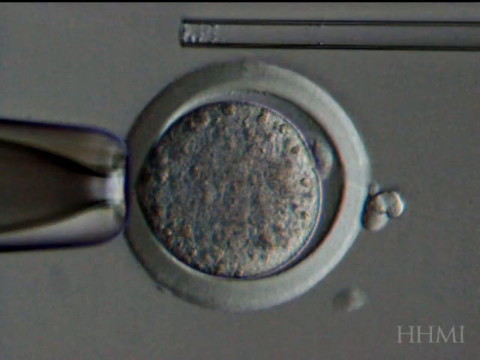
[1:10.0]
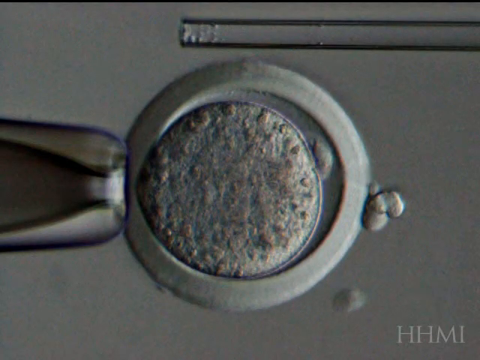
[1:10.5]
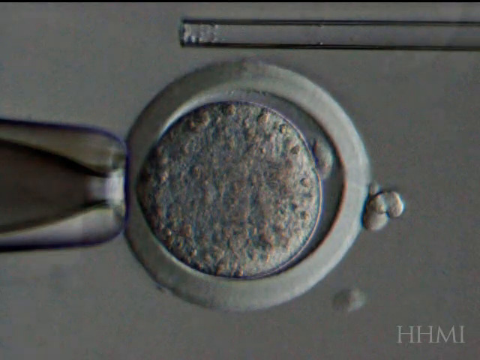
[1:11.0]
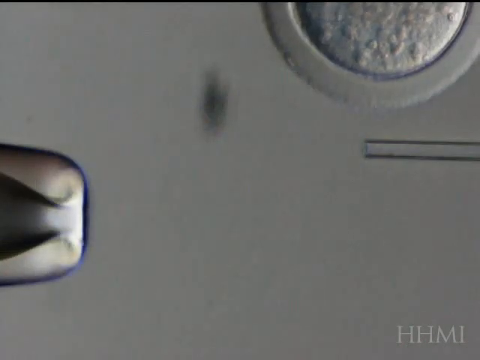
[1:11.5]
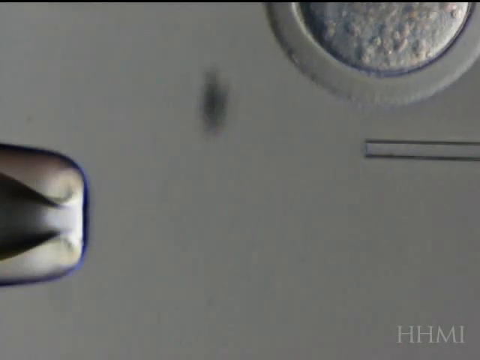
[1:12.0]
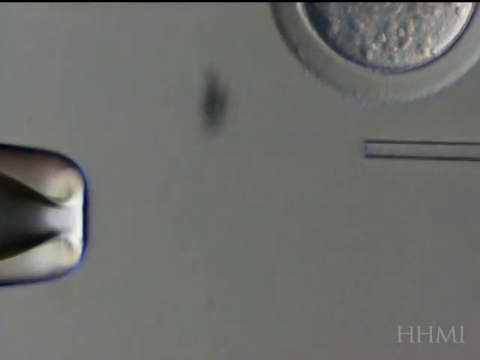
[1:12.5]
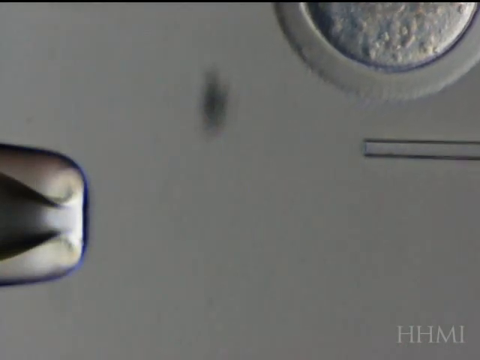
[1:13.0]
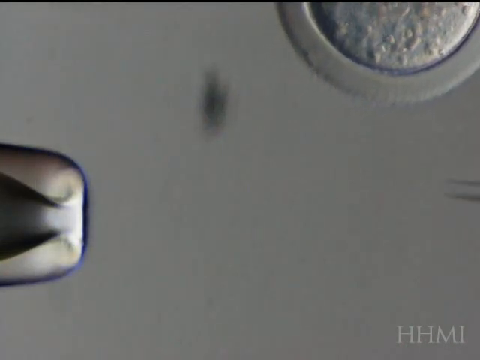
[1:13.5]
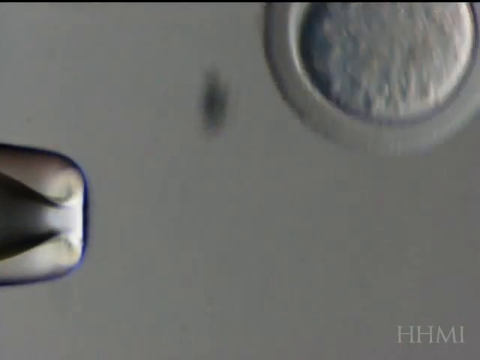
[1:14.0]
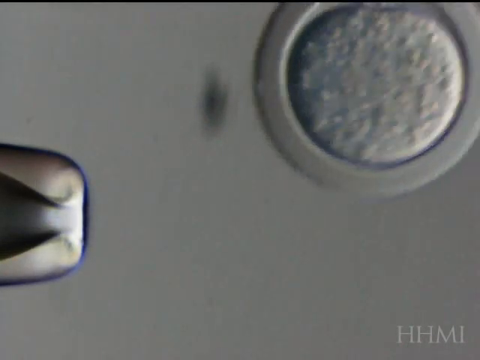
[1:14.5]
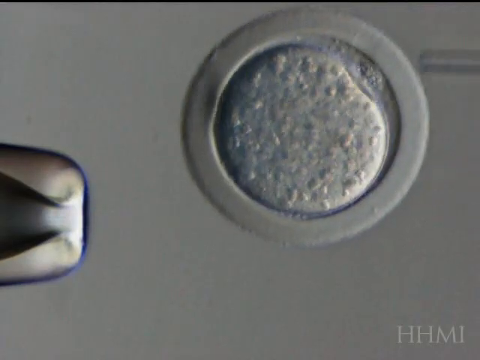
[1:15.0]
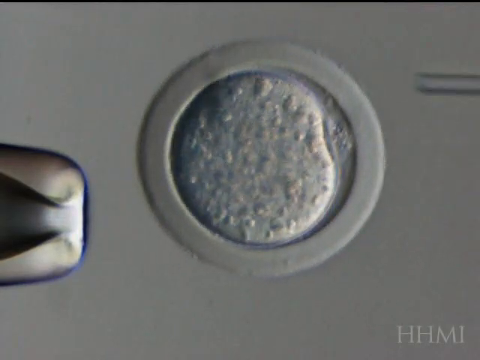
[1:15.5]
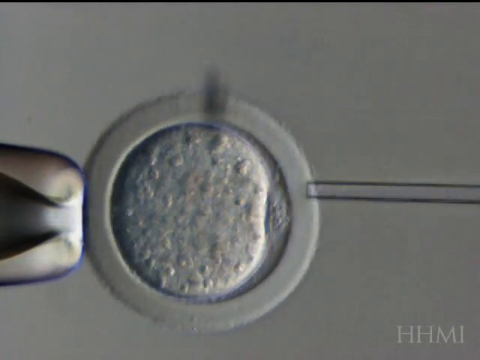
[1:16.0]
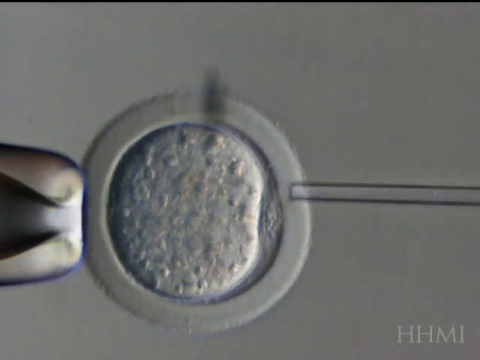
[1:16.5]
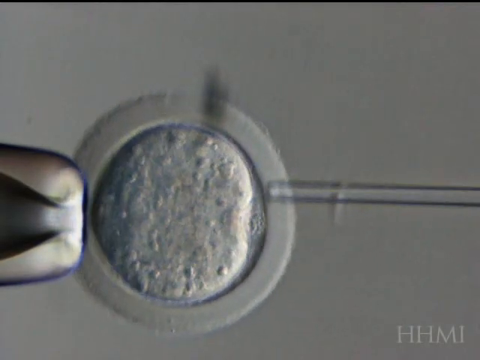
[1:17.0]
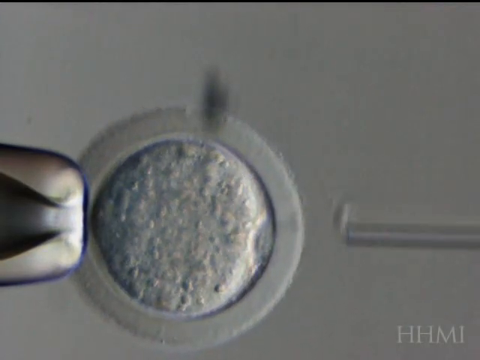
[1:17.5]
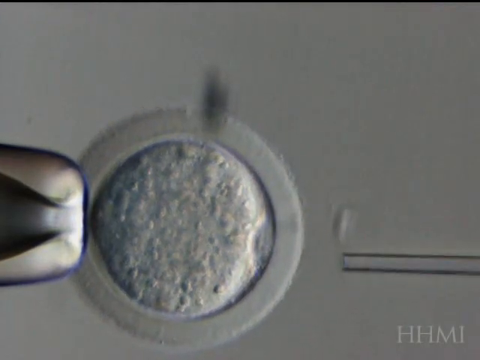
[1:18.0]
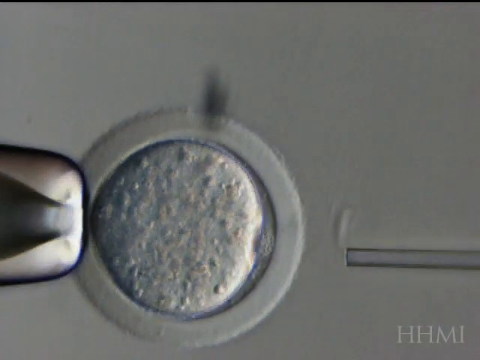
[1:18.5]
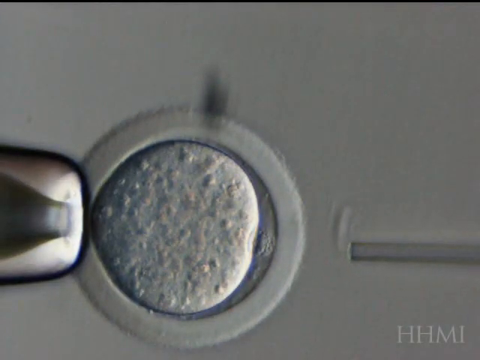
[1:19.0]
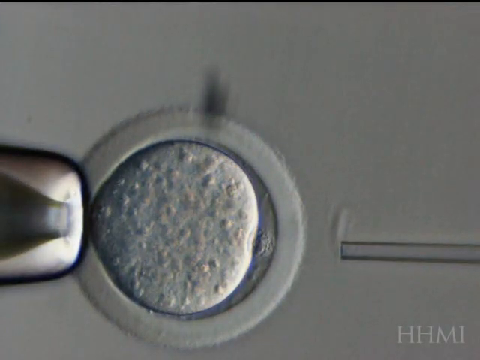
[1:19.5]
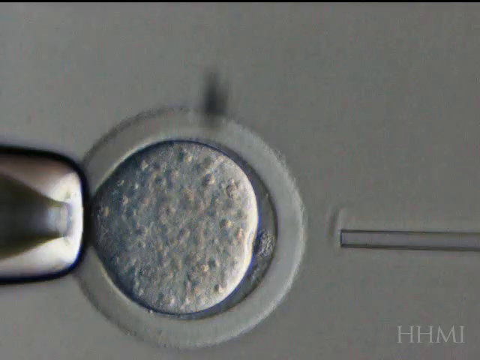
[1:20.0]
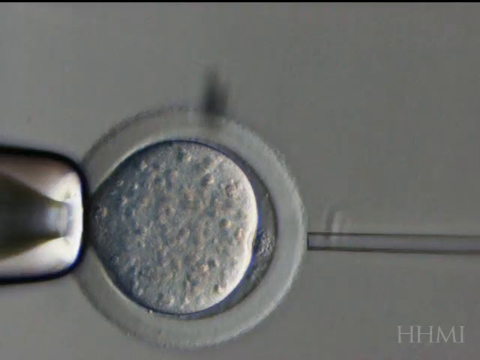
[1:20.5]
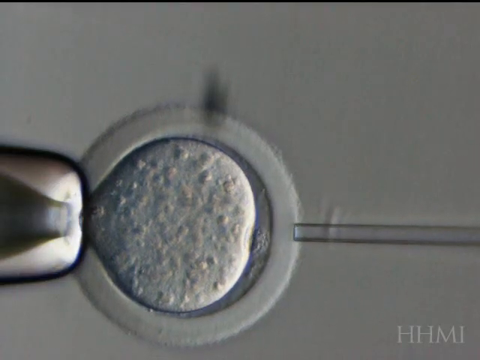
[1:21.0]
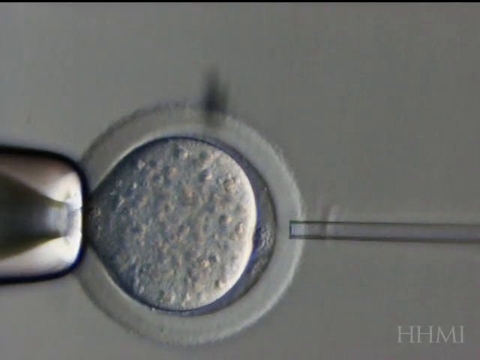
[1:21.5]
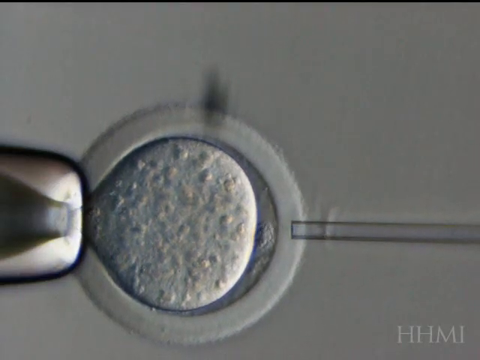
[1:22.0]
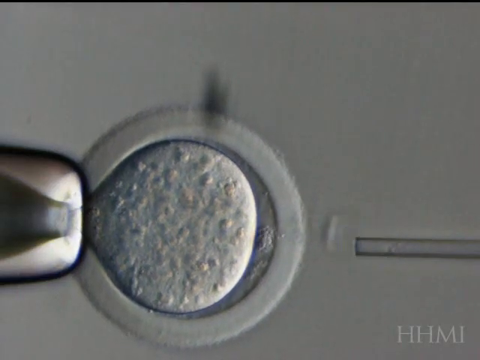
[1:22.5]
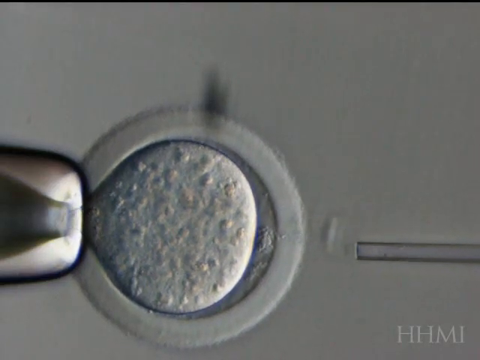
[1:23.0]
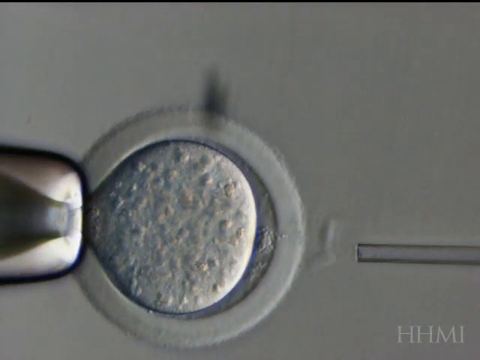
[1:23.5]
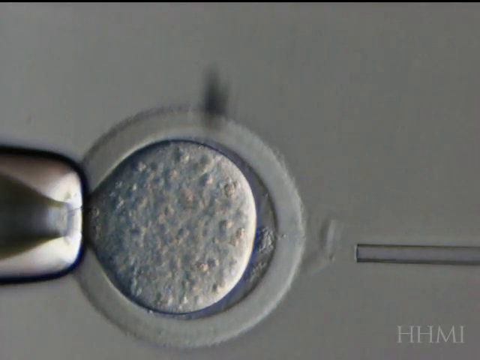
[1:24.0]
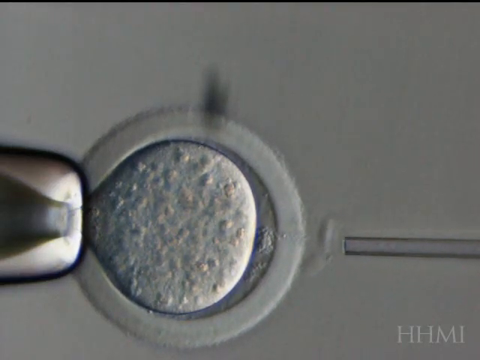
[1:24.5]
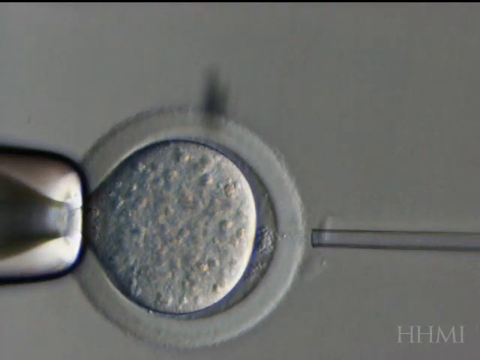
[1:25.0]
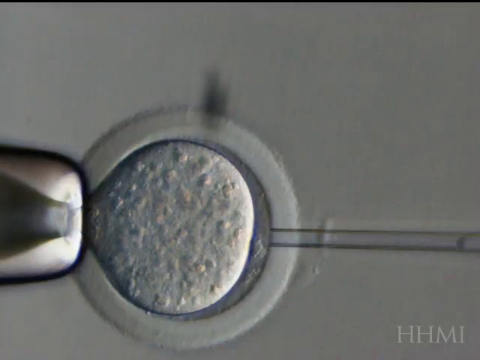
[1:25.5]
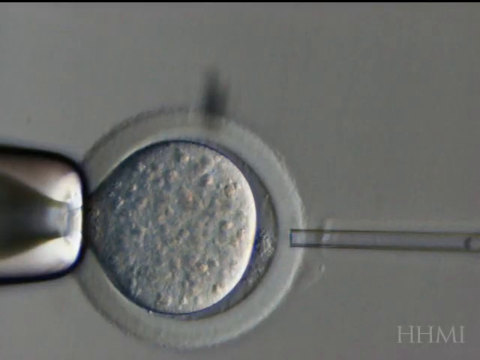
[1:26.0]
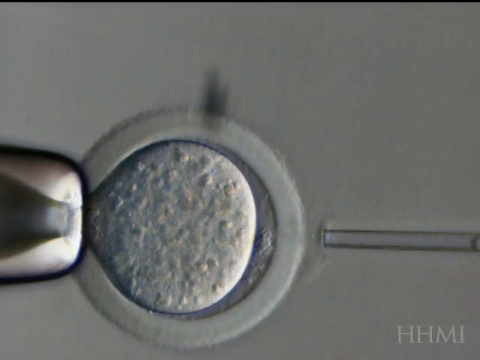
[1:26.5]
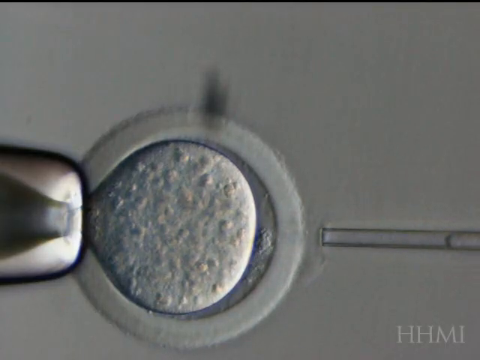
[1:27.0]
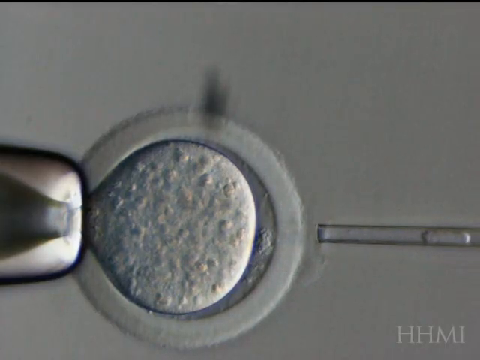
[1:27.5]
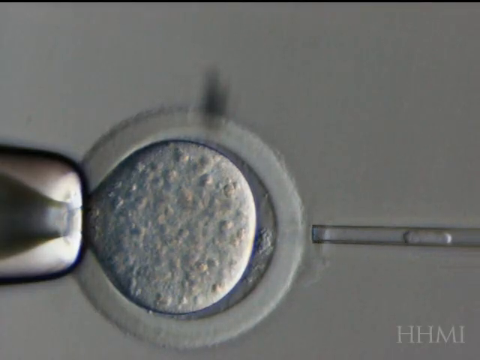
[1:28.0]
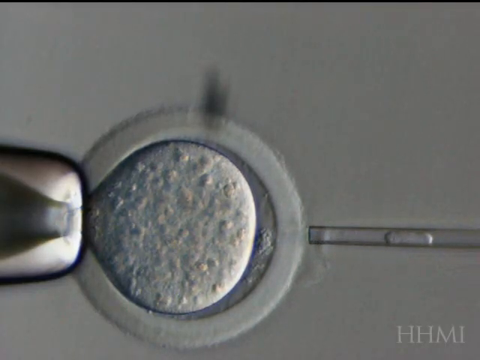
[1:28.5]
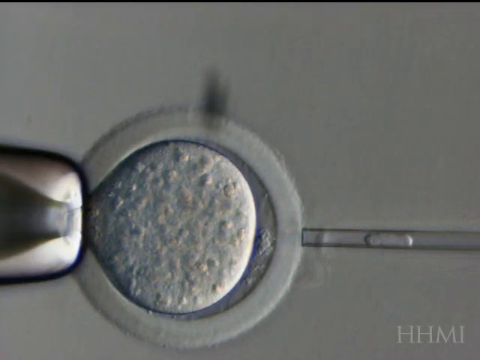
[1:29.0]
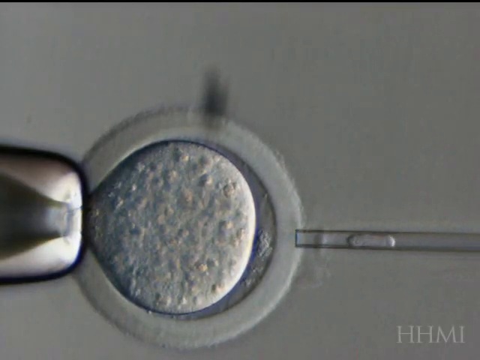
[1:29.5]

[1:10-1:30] The circular object with the dual membranes has moved to the top right of the screen and is extremely blurry. The glass tip appears to push it towards the metal tip, and the picture seems to slowly come into focus. As the glass tip pokes and prods into the membranes, it inadvertently sucks some of the material out. The glass tip penetrates the outer membrane fairly easily, and the entire object looks slightly squishy. The membranes look fully intact and there are no excess blobs, but the glass tip dispels a little air and some of the material it may have inadvertently captured from the membrane. An unidentifiable black smudge is on the top of the membrane. When the dual membranes are pushed into the metal tip, they break apart slightly, and the material almost looks like it is going into the metal tip.